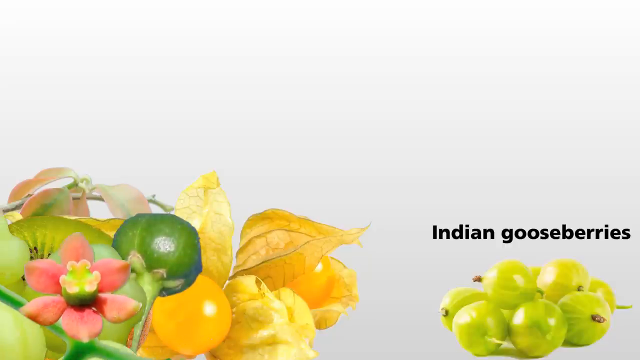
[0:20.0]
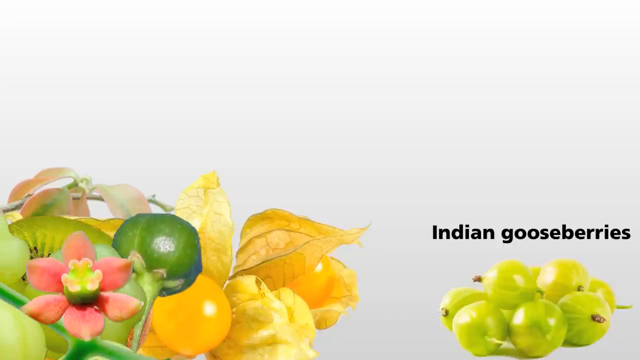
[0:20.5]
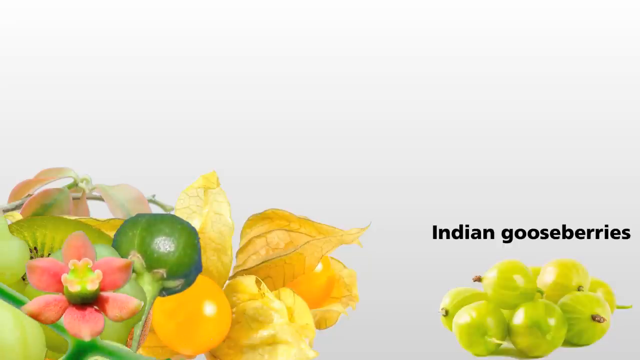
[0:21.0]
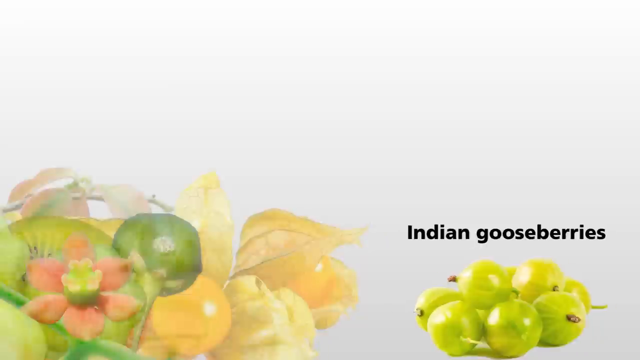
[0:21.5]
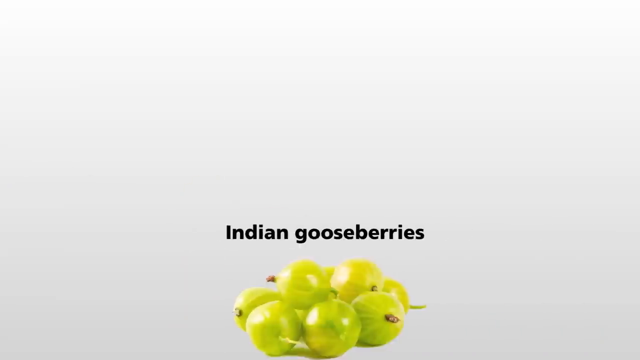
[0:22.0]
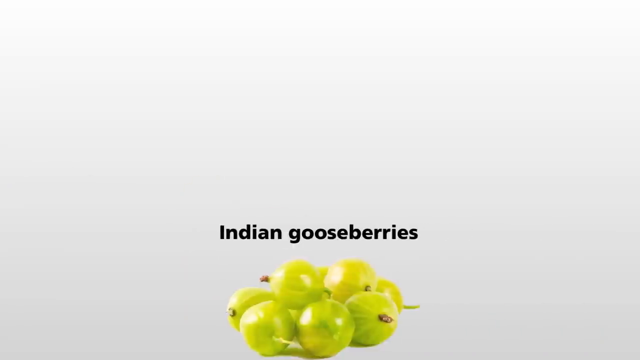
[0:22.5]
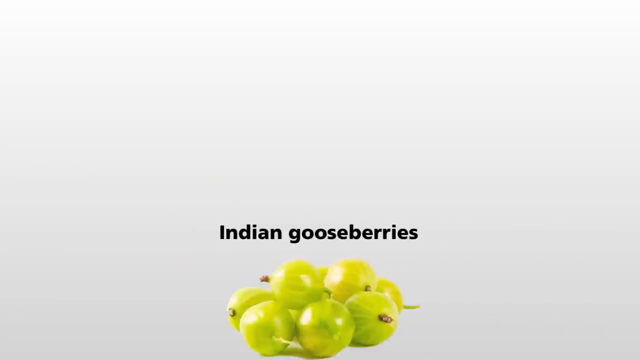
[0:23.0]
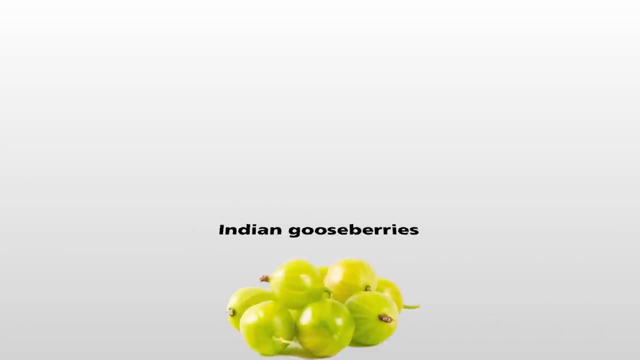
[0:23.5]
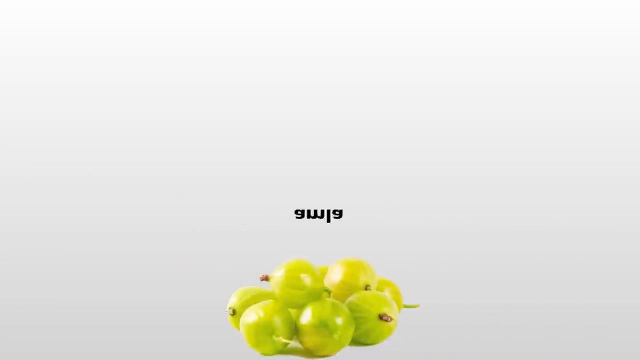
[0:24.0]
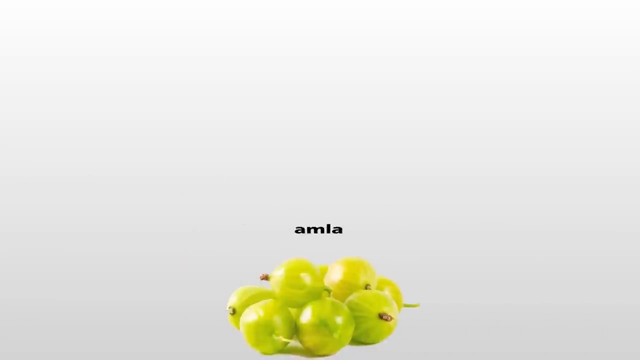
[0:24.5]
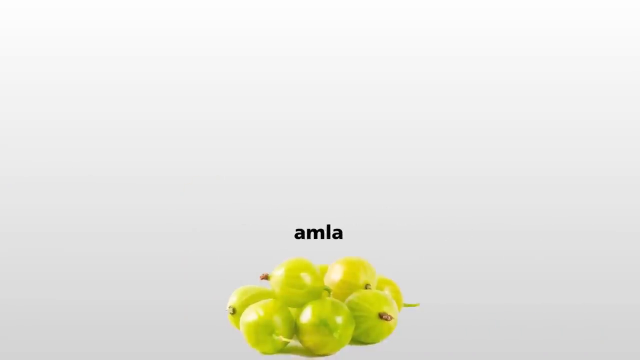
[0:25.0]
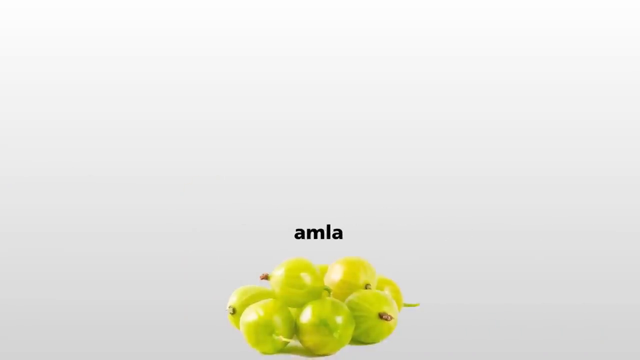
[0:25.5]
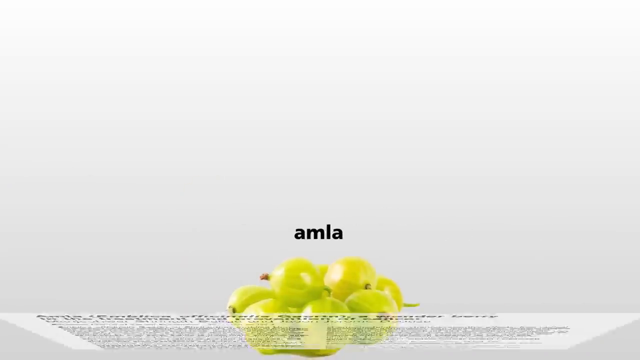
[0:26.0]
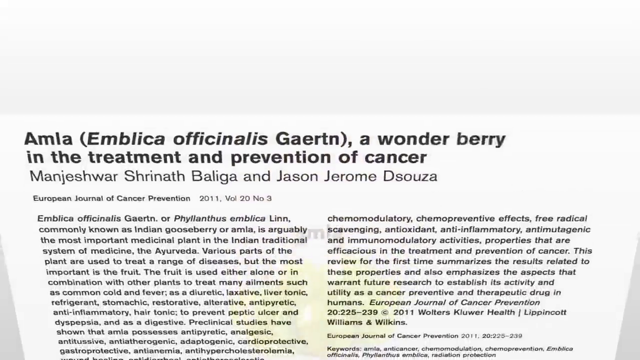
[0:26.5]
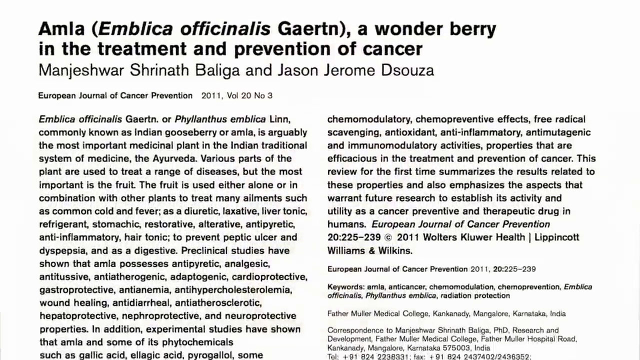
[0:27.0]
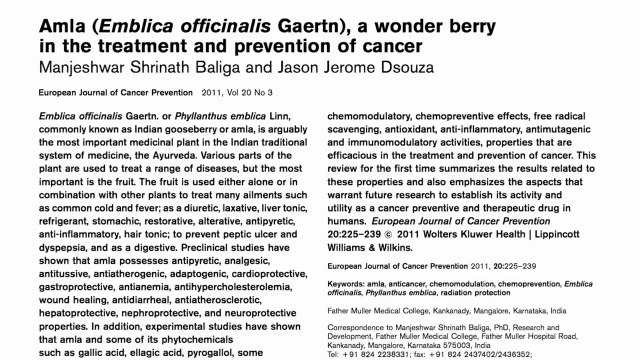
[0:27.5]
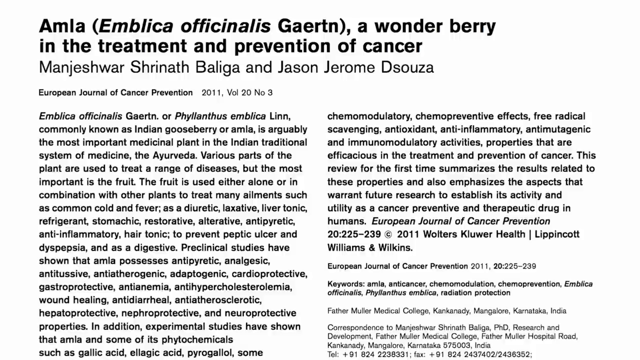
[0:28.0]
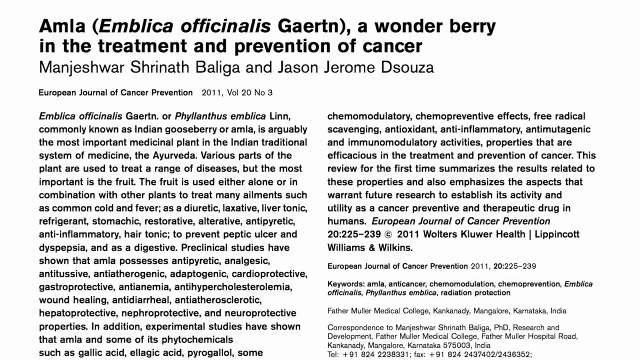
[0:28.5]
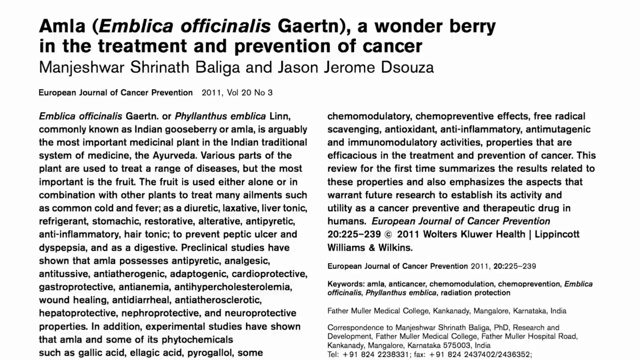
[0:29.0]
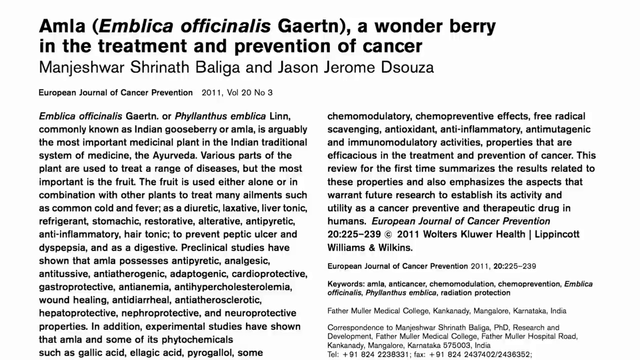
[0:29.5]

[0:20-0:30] On a light gray background, the left side holds a few pictures of fruit and plants with kind of transparent backgrounds, all kind of stacked on top of each other: a plant with yellow leaves and a yellow circular center, a kiwi sliced in half, a fruit or flower with pink petals and a green center, and another fruit with a bulbous green top and a skinny green stem. On the right is a pile of six or seven small, circular, light green gooseberries, with black text above them reading "Indian gooseberries". The fruit on the left all disappears, and the Indian gooseberries and the text slide to the middle of the screen. The text "Indian gooseberries" changes to "Amla". Then an image of what looks like an article appears, with black text on a white background, titled "Amla (Emblica officinalis Gaertn), a wonder berry in the treatment and prevention of cancer"; it seems to discuss the Indian gooseberry, also known as amla, as an important medicinal plant.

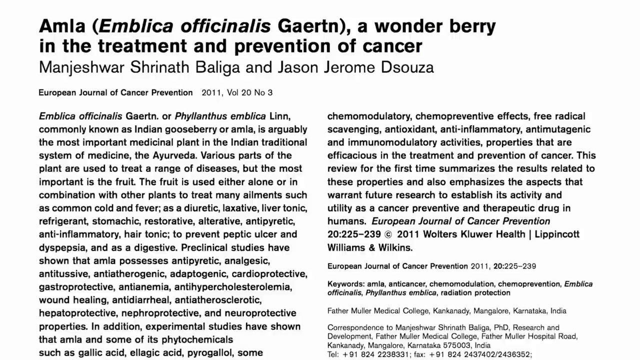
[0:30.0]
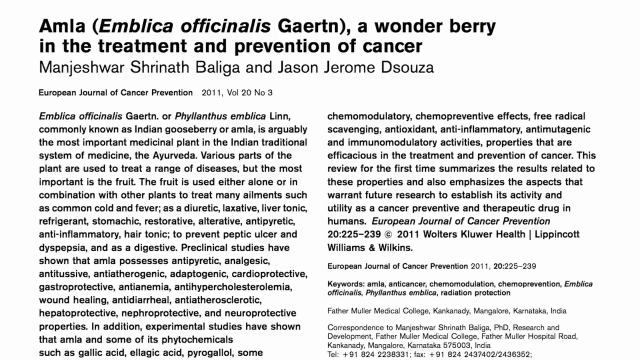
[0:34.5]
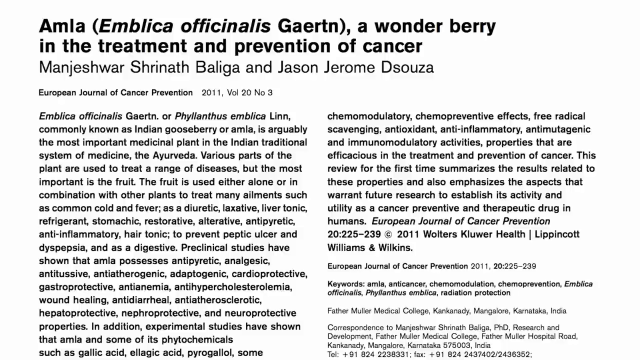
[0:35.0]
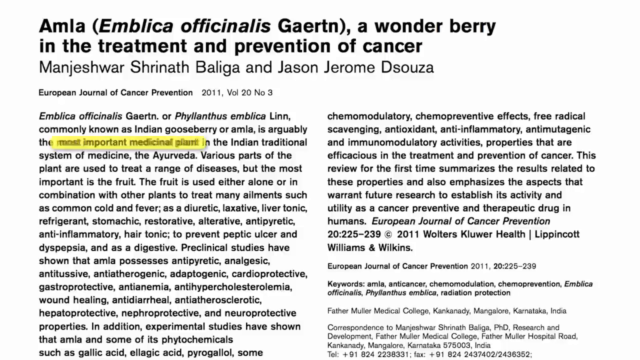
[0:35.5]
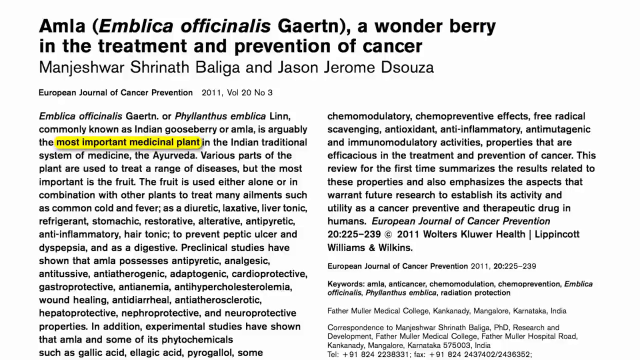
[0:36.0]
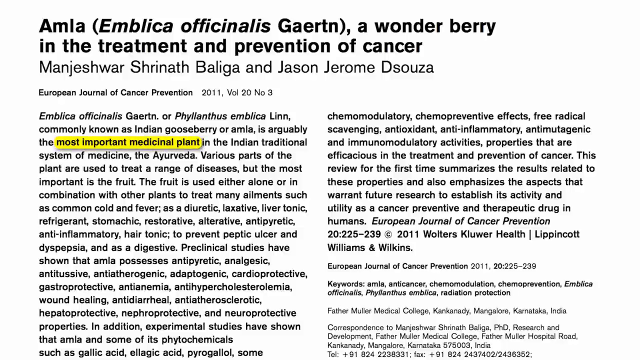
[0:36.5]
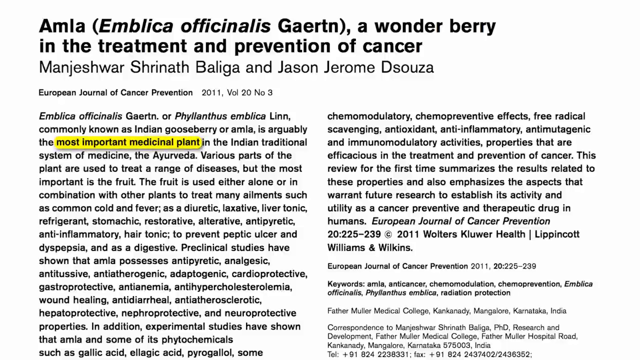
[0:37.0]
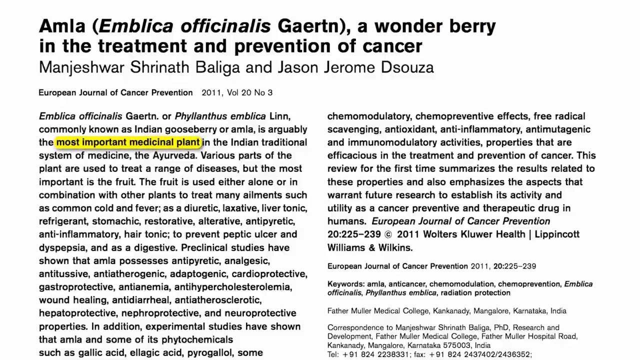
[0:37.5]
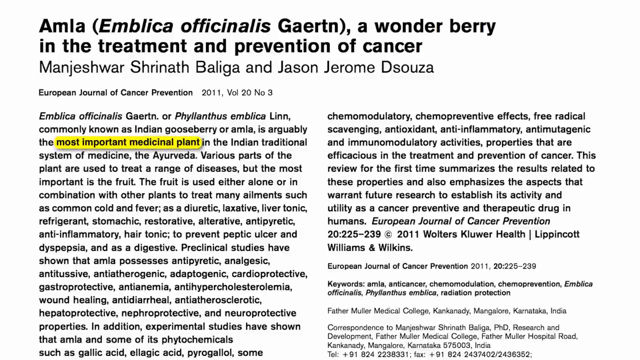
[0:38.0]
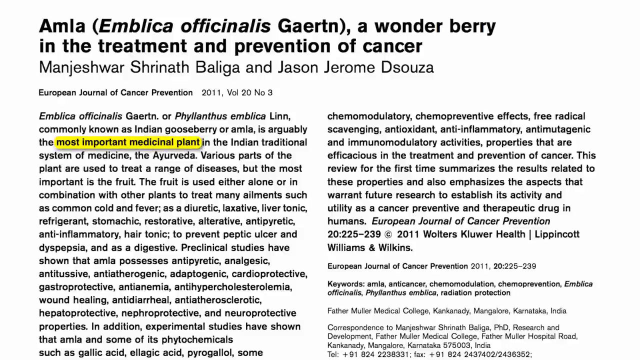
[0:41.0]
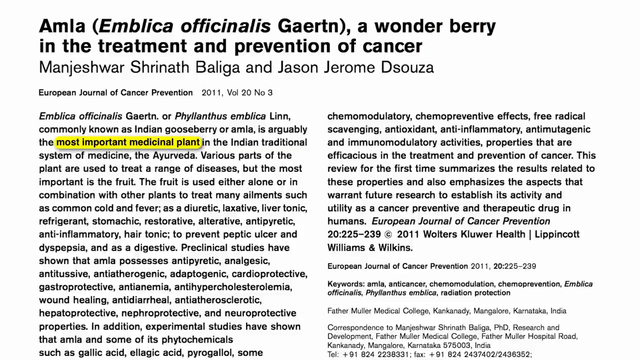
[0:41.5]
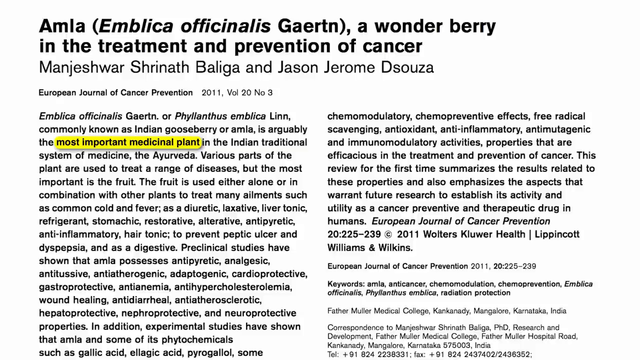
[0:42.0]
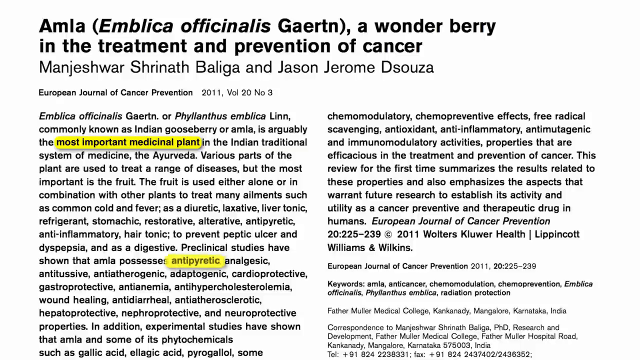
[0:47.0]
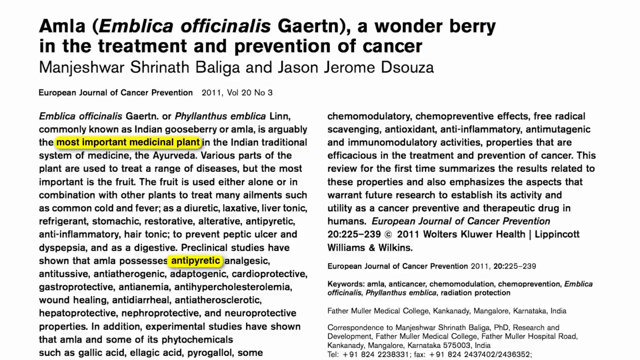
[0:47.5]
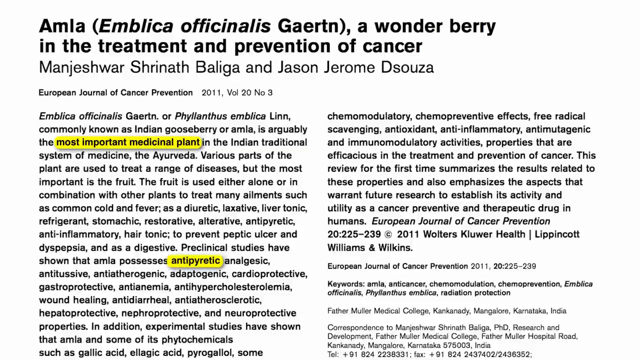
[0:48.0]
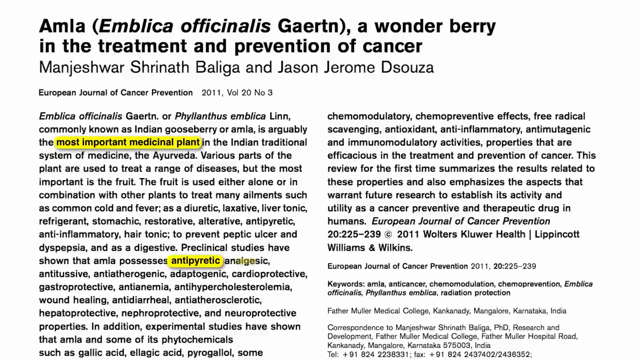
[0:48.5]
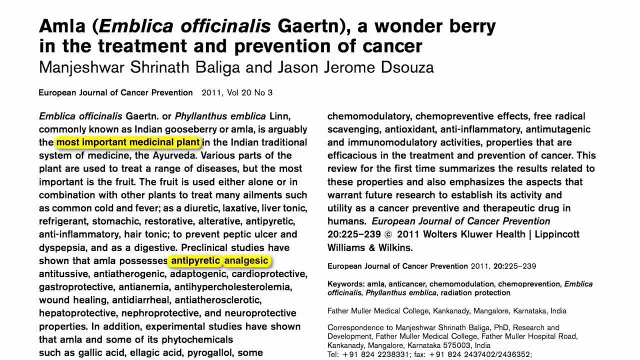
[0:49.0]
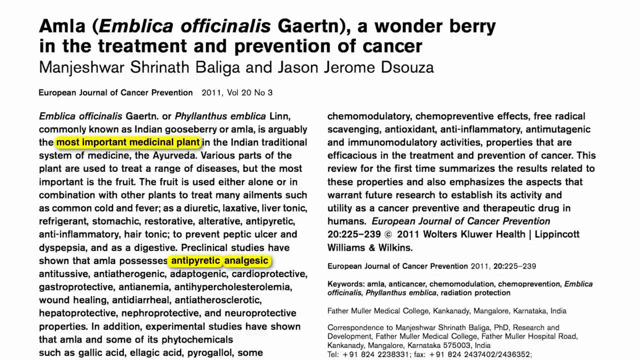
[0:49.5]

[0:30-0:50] A document shows an article on a white background with two columns of small black text; at the bottom of the right column, even smaller text gives works cited and contact information. At the very top, in bold black text, is the title "Amla (Emblica officinalis Gaertn), a wonder berry in the treatment and prevention of cancer", with the authors' names underneath, Manjeshwar Shrinath Baliga and Jason Jerome Dsouza. The article is from the European Journal of Cancer Prevention, 2011, volume 20, number 3, and seems to discuss the Indian gooseberry and its medicinal uses in Indian traditional medicine. Yellow highlighting pops up at the top of the first paragraph on the text "most important medicinal plants". After a few seconds, more words are highlighted in yellow one after another: "antipyretic", "analgesic", "antitussive".